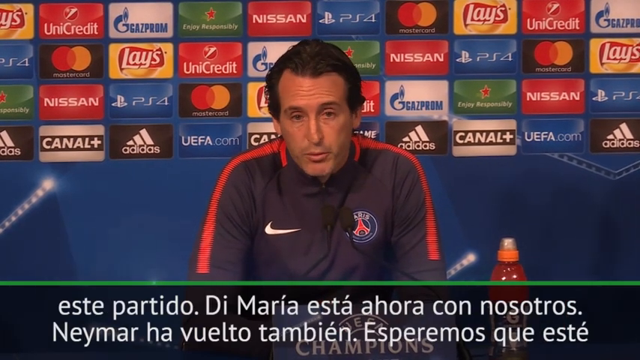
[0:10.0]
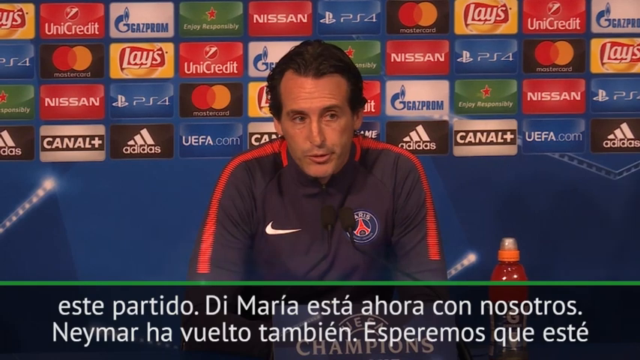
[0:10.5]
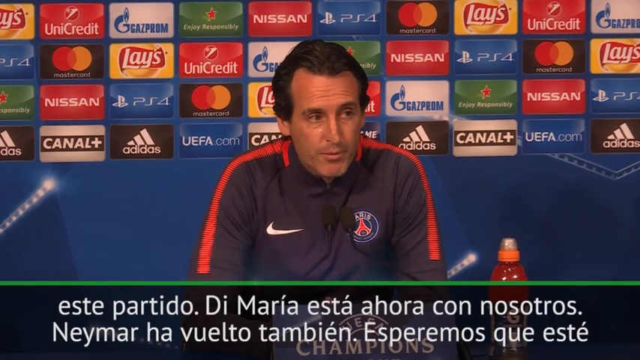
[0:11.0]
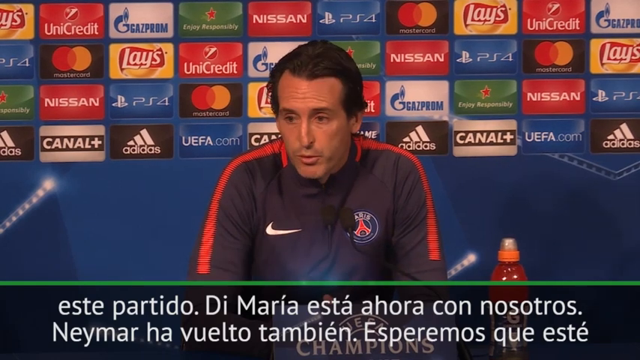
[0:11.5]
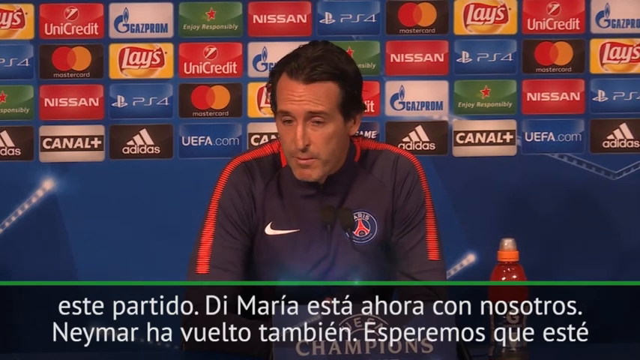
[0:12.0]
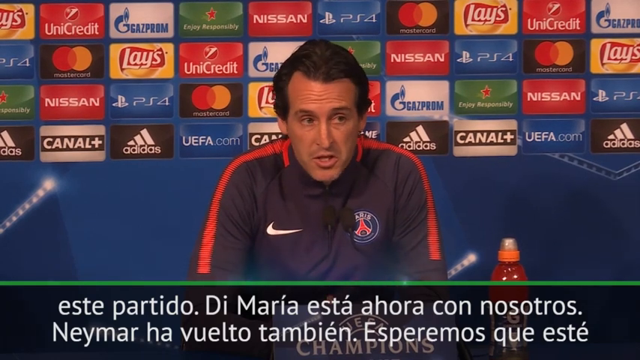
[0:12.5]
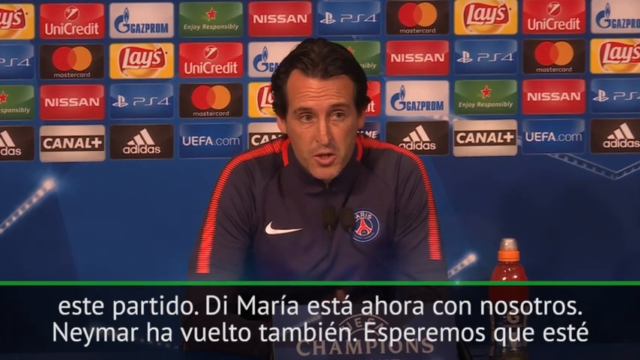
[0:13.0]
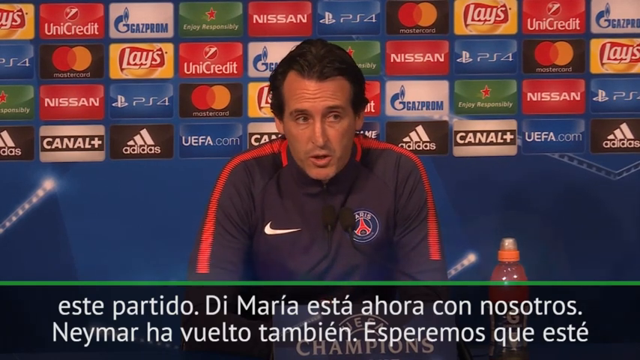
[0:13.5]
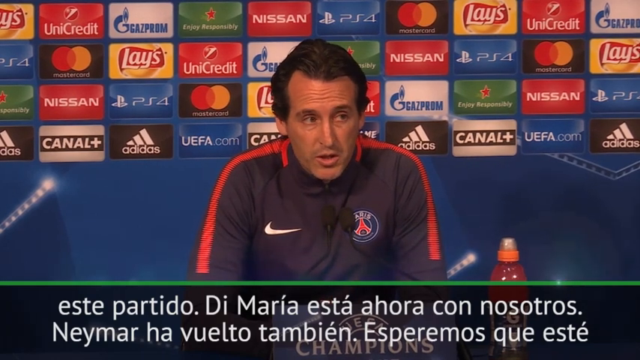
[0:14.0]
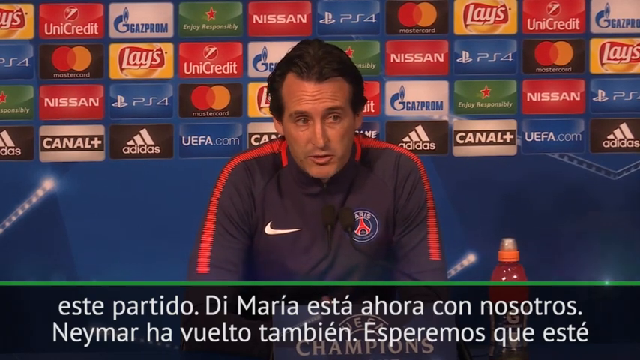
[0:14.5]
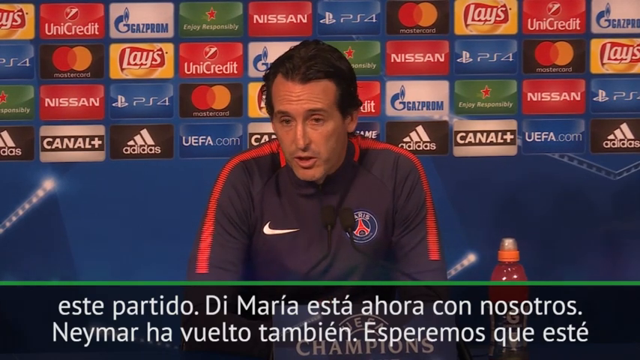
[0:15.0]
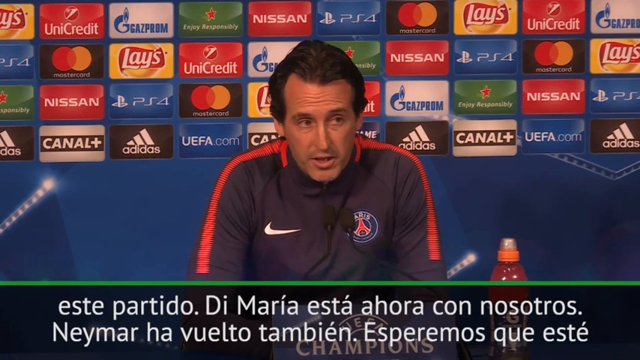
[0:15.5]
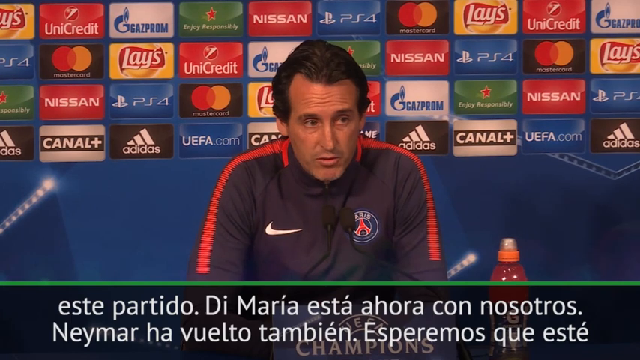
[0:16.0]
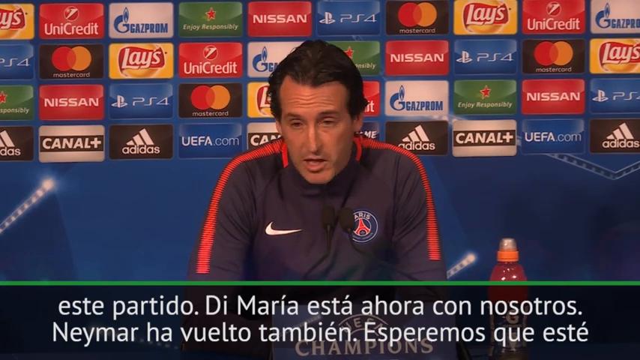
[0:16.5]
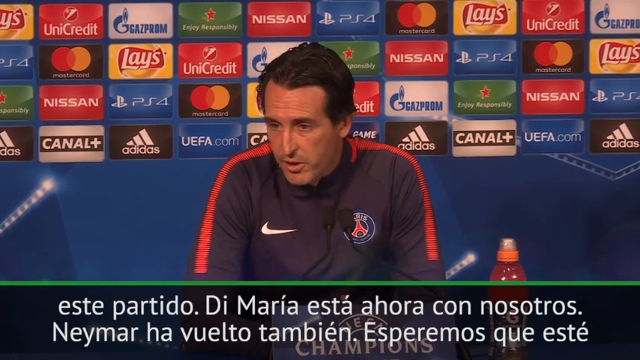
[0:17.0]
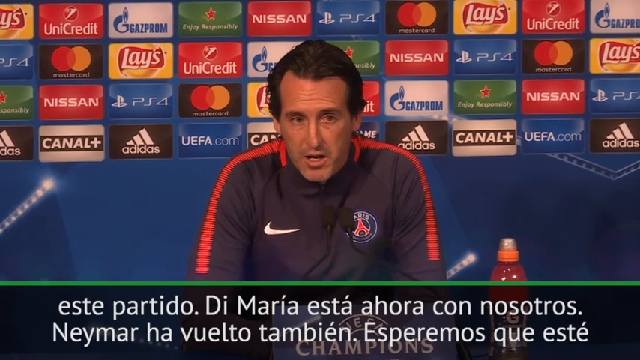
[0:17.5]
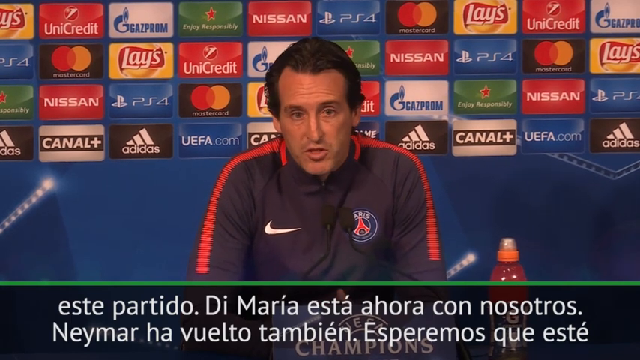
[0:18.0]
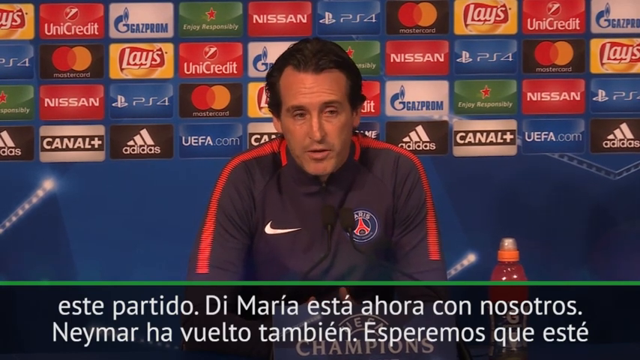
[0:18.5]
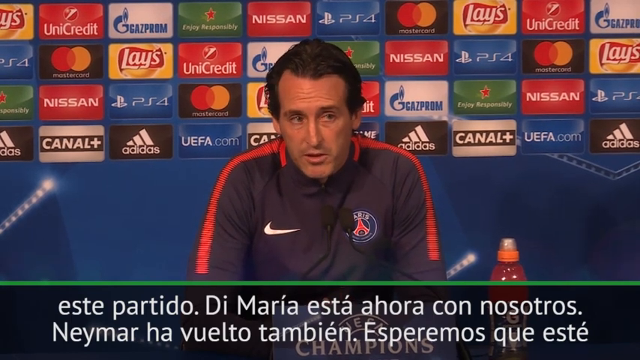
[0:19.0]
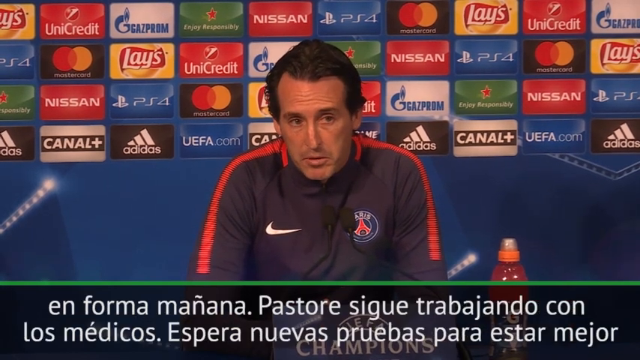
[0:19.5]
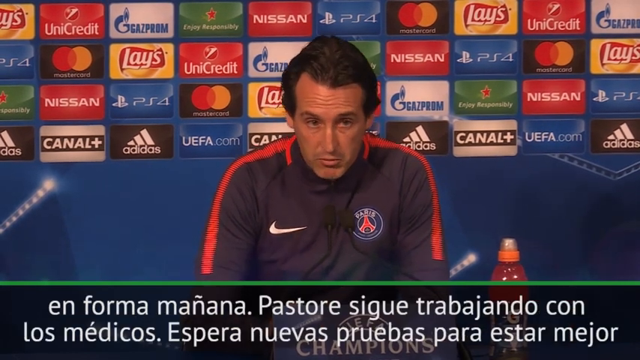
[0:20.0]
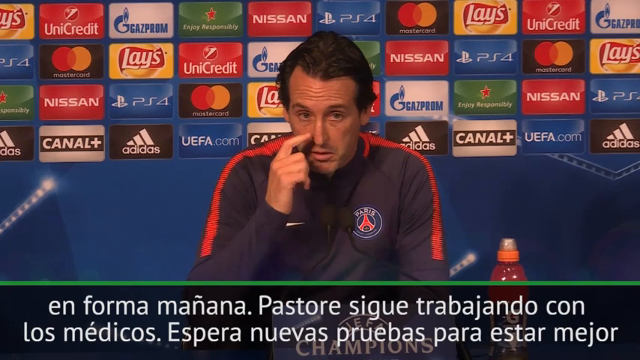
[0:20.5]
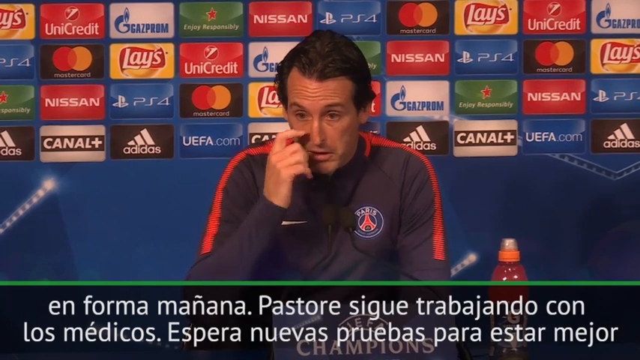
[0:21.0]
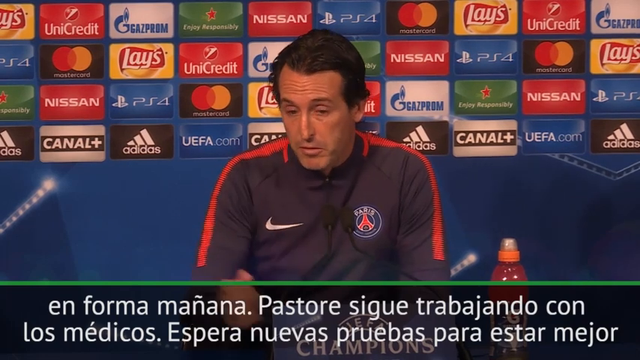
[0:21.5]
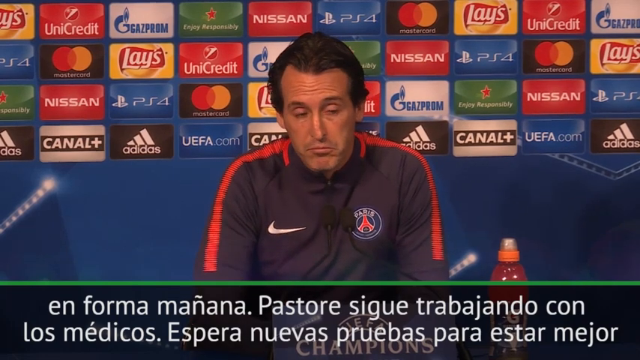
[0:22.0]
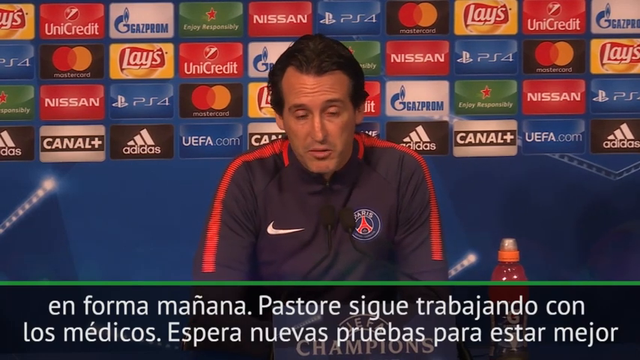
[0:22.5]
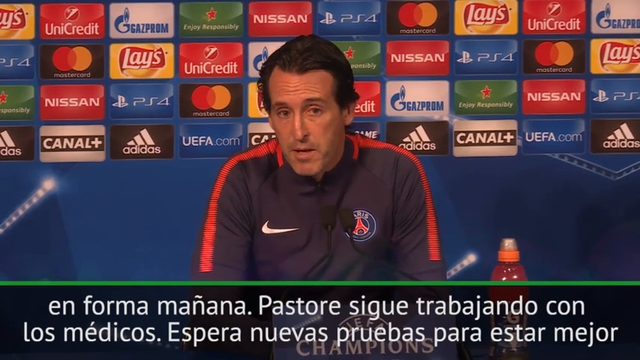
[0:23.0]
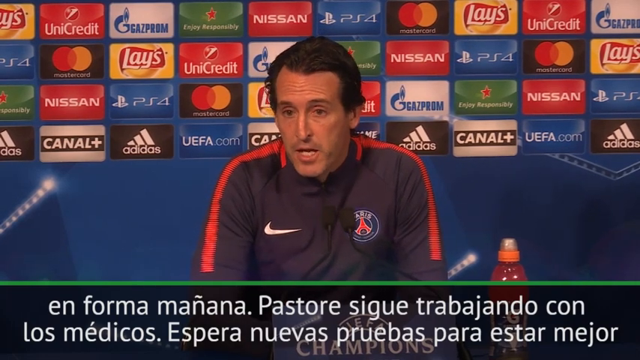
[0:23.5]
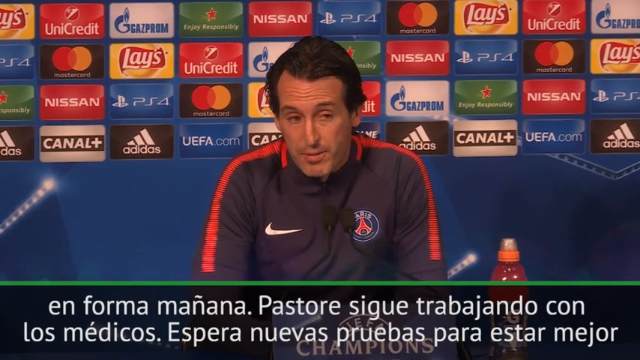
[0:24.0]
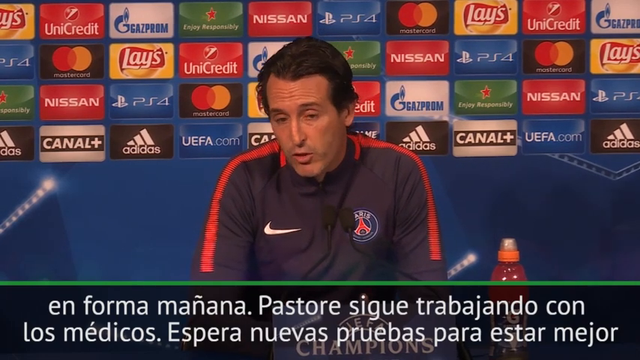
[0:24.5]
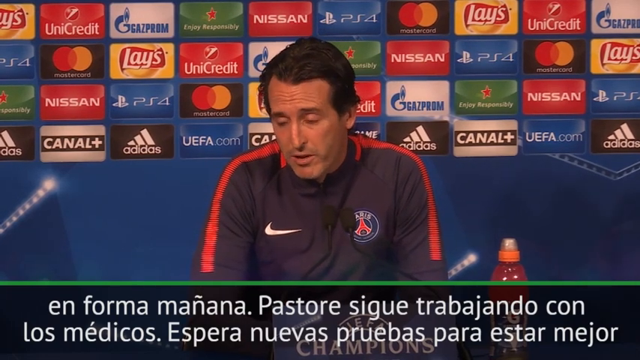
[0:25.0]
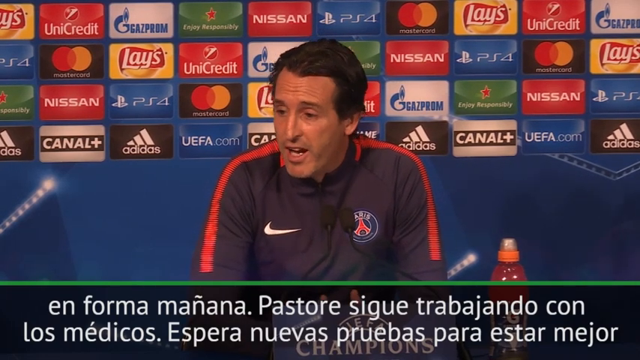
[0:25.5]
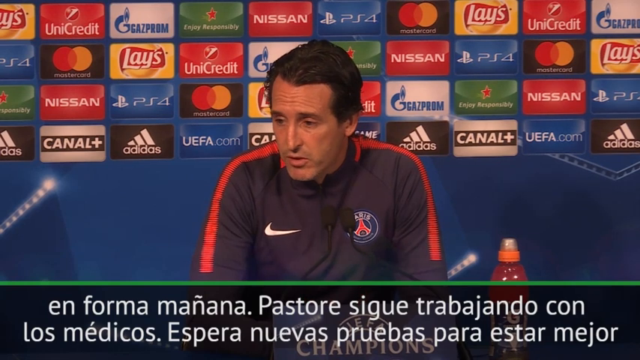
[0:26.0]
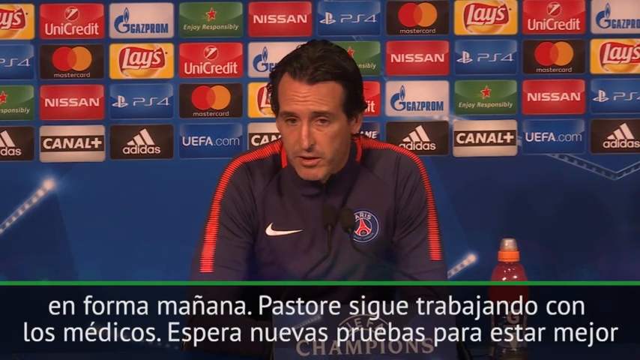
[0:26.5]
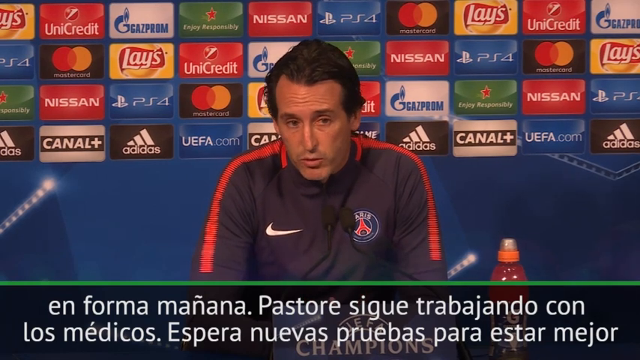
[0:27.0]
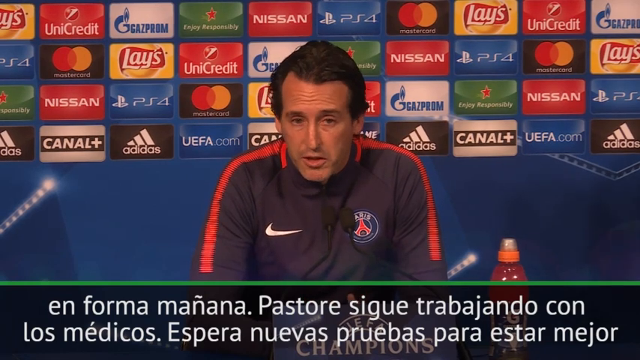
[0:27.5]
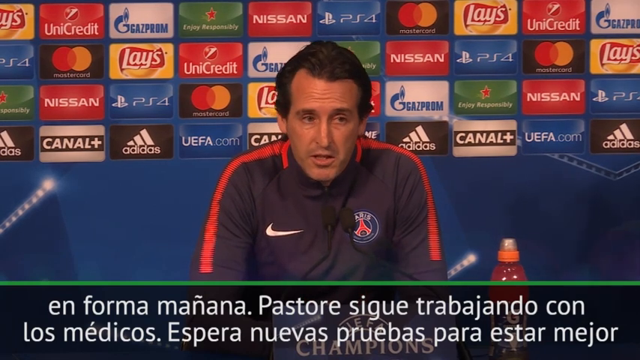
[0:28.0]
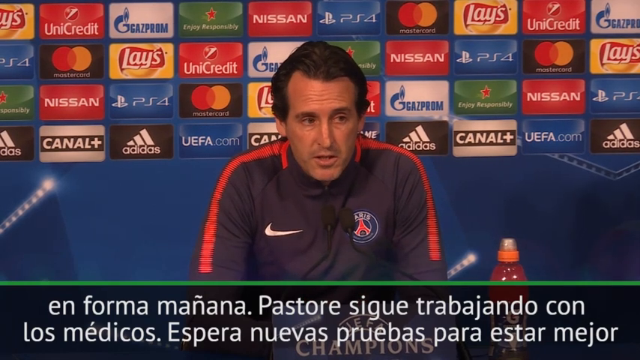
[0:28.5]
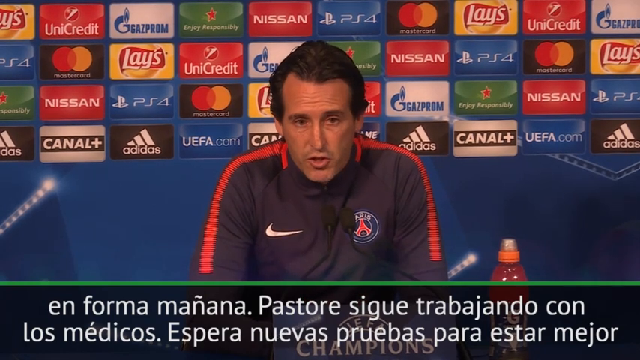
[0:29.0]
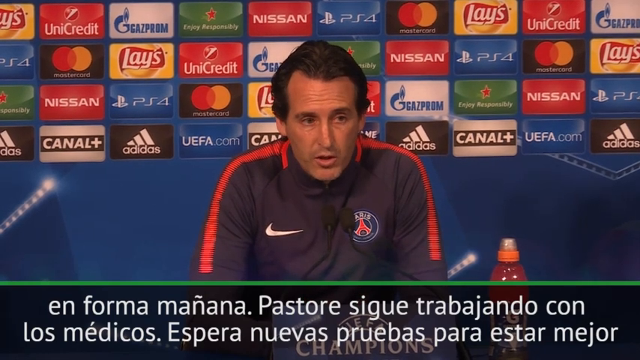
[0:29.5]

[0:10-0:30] Emery wears a blue Nike sports jacket with the Nike logo on his left breast and some type of patch on the other side, plus red stripes on the right and left shoulder areas. He has dark hair and looks to be around 30 or 40-ish. Next to him is what looks to be maybe a bottle of some kind of red drink. He is behind a table or desk, speaking to someone or a group of people, possibly at a press conference, and not in English. Behind him is a large wall with multiple advertisements for national brands, including Lays, Adidas, MasterCard, Nissan, Canal Plus and Unicredit. The bottom of the wall is blue, and something below where he is speaking says "champions".